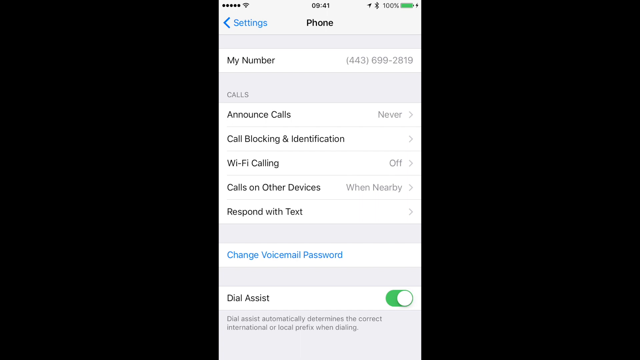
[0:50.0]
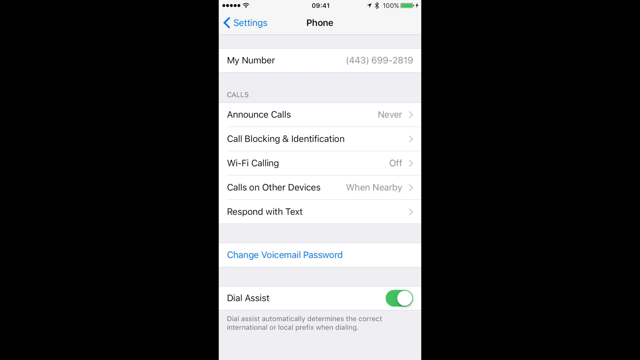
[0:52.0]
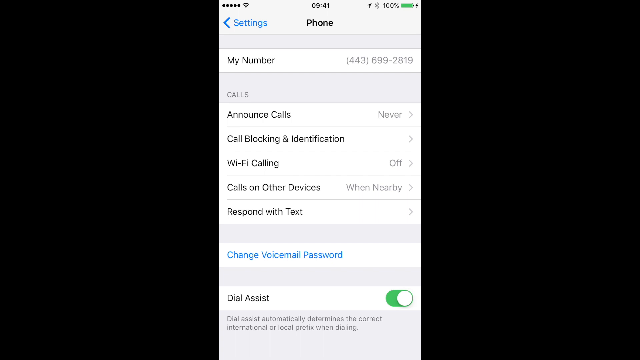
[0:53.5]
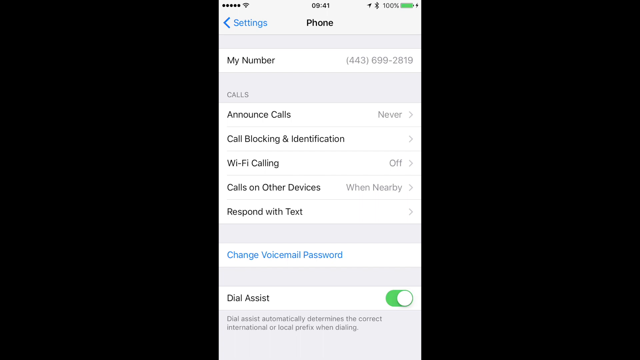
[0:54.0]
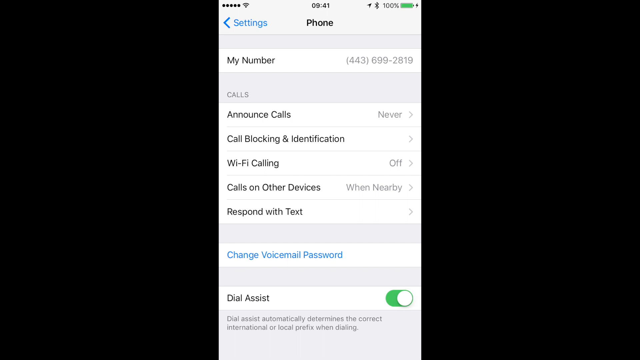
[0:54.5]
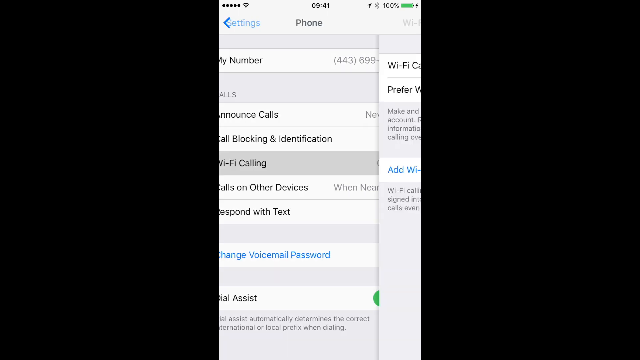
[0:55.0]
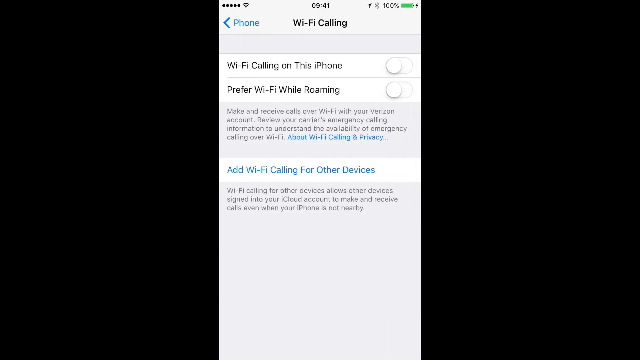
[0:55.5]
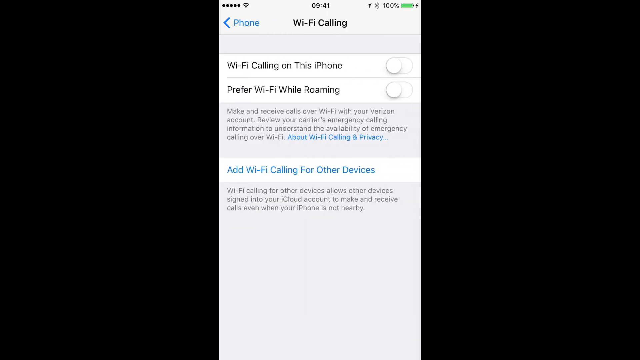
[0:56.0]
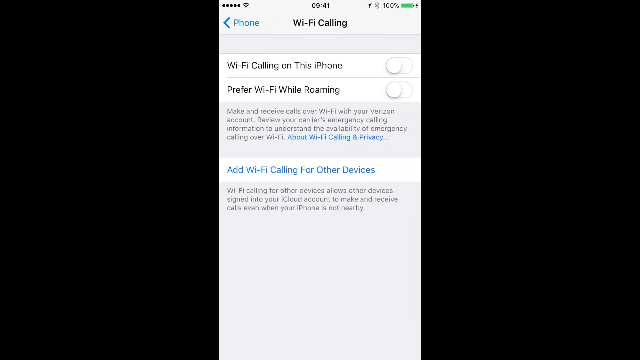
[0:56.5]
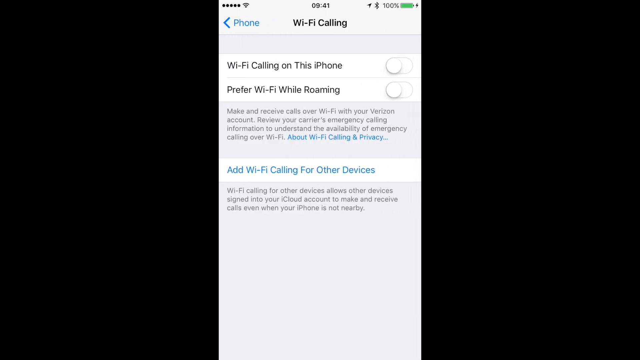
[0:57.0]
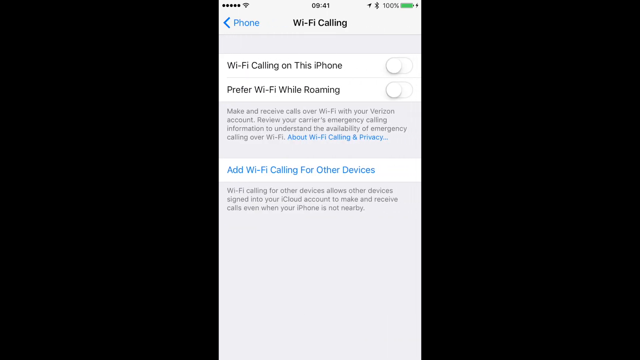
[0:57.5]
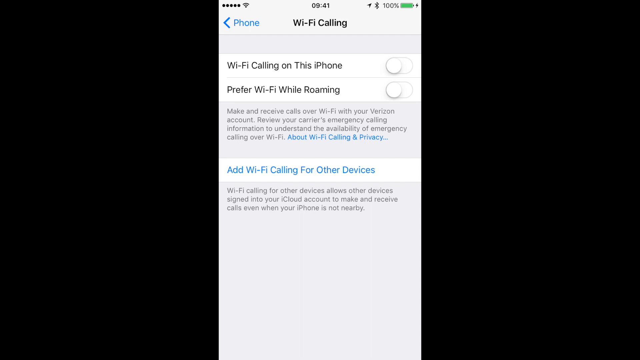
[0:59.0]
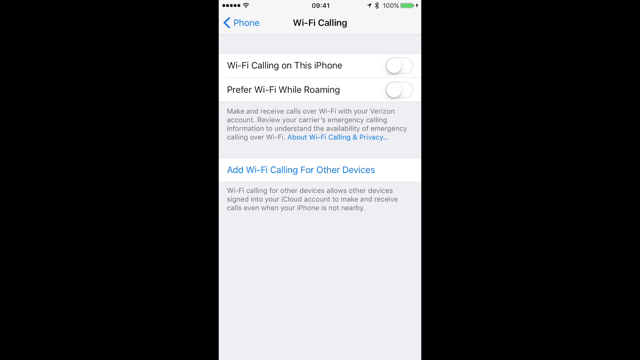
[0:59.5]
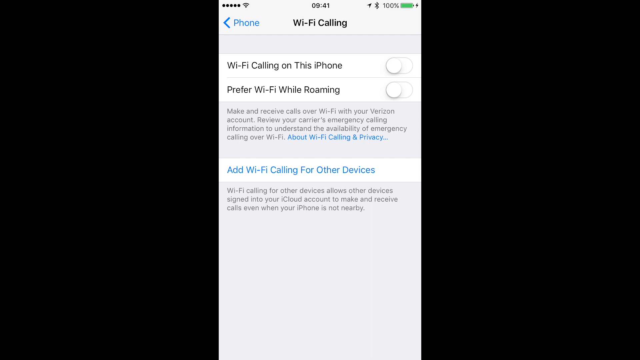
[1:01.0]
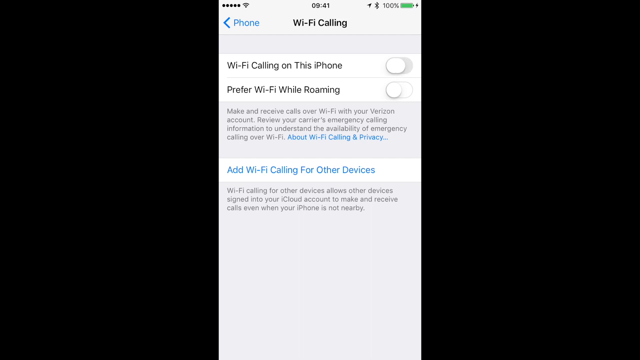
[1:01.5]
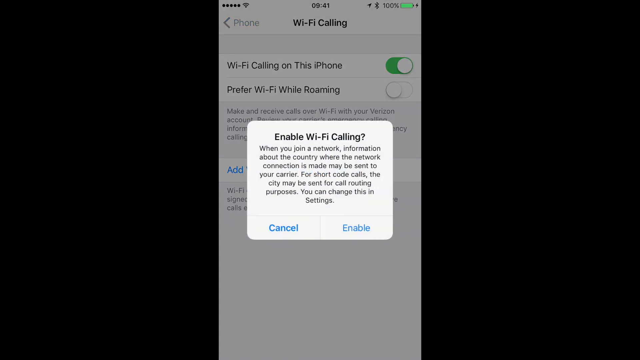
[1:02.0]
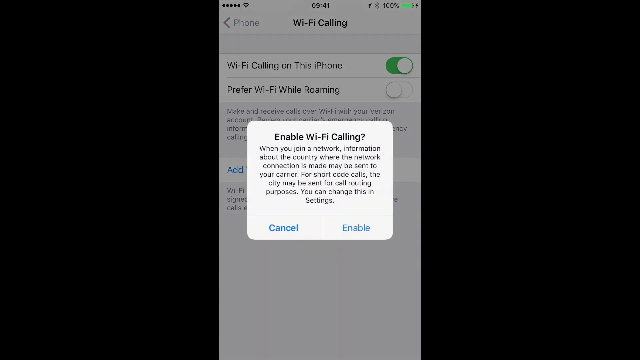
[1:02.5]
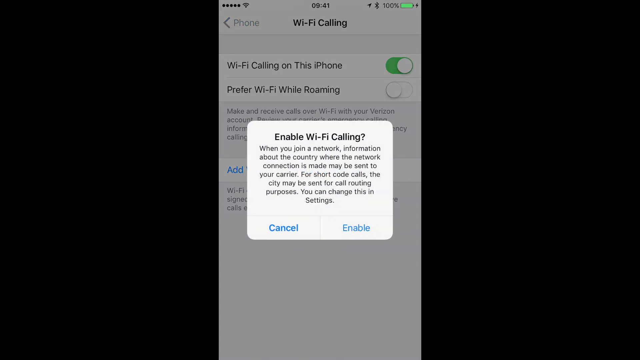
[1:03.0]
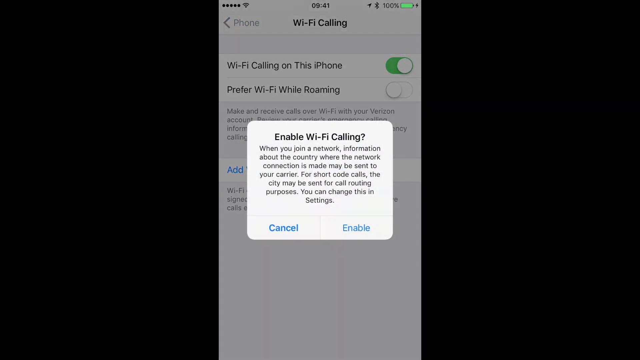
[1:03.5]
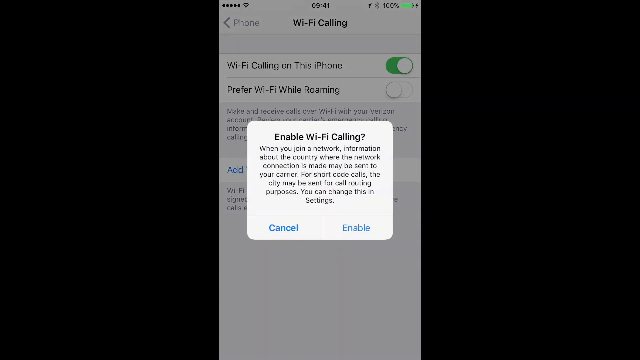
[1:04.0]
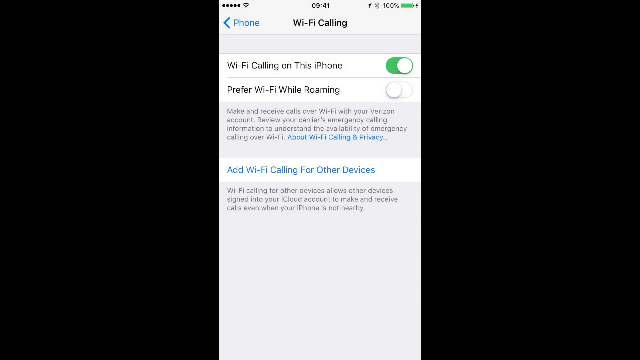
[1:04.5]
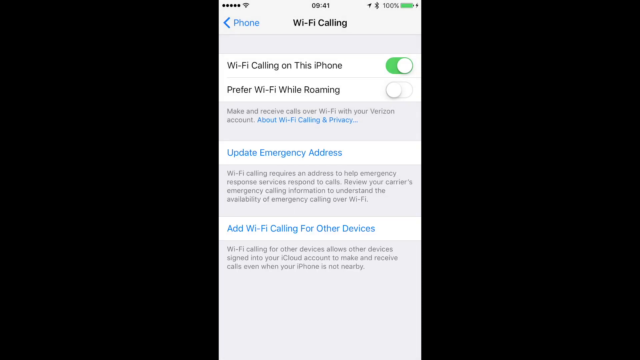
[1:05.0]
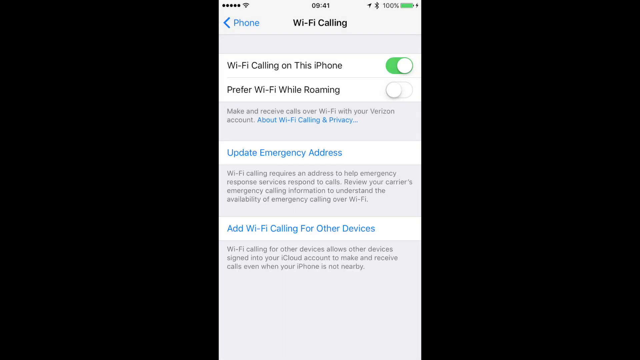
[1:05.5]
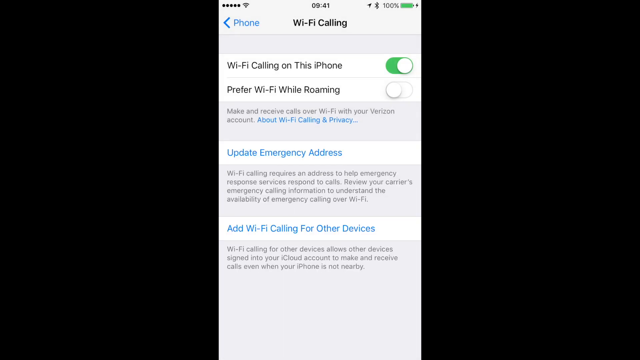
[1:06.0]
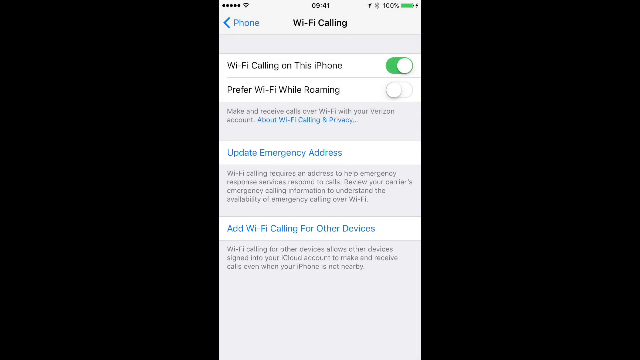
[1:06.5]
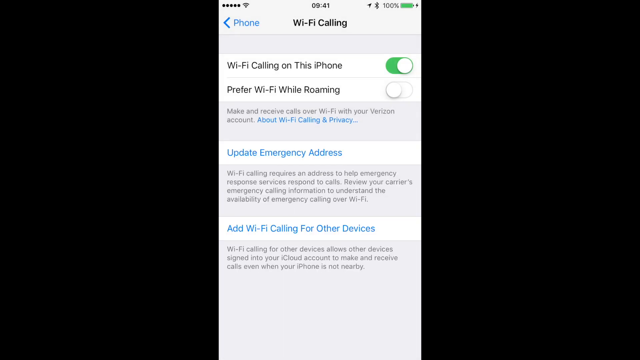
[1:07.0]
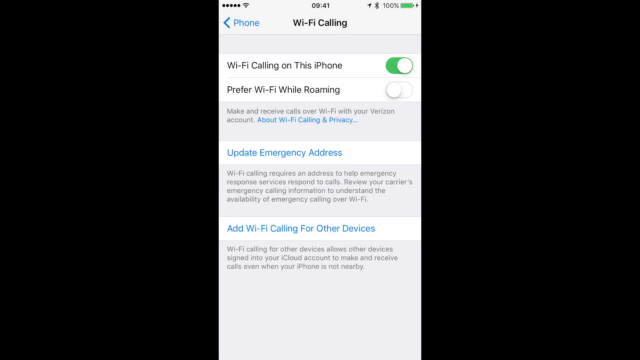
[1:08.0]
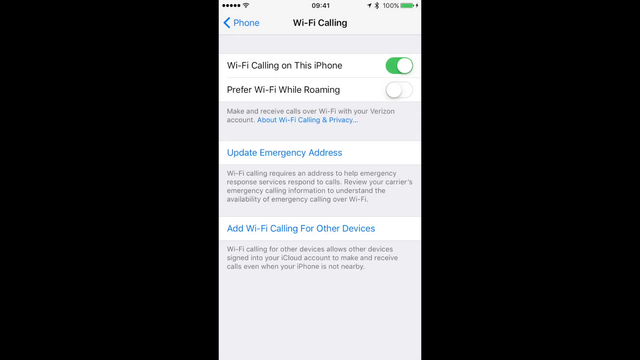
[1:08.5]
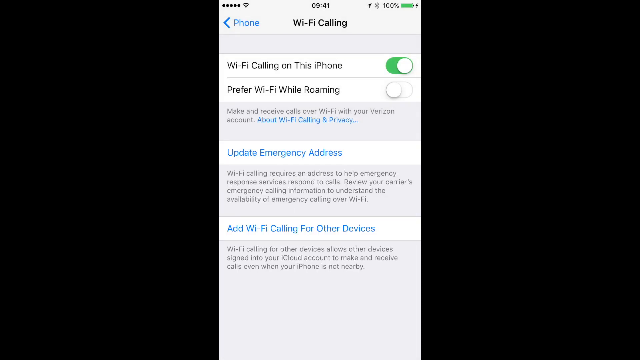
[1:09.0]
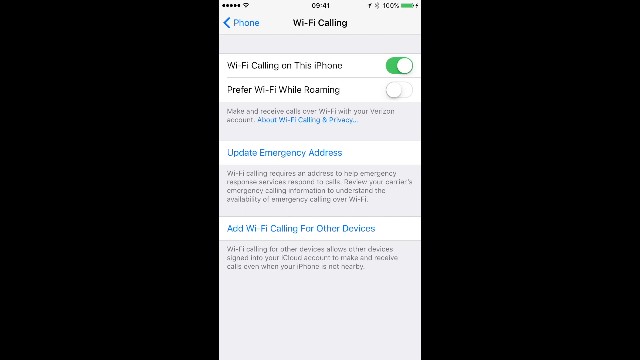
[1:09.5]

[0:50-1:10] On the all-black background, the mobile device's screen in the center has a background of white and gray rectangle-shaped boxes. The time is at the top center, with the Wi-Fi symbol in the upper left corner and the location, Bluetooth and battery charge icons in the upper right corner. Right under the time, in bold black letters, is the title "phone", the phone section of the settings, and to its left is a blue arrow pointing left with the word "settings" in blue. Beneath that is the device's information: my number and a phone number. Options for announce calls, call blocking and identification, Wi-Fi calling, calls on other devices, respond with text, and change voicemail password, written in blue text, are listed, and the dial assist option has a slider or toggle button in the on position. The screen stays there for several seconds before going to a Wi-Fi calling screen with two options for Wi-Fi calling, both off.